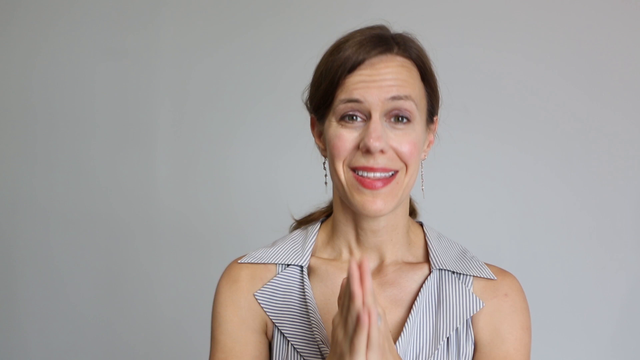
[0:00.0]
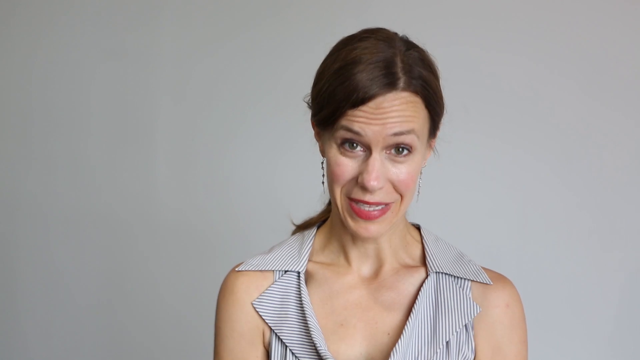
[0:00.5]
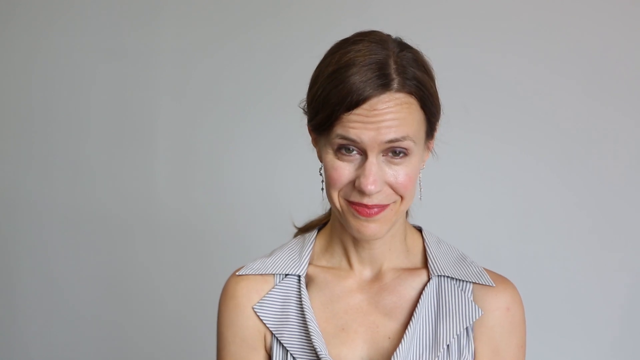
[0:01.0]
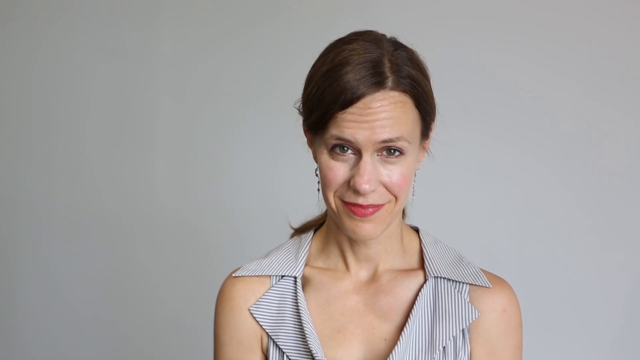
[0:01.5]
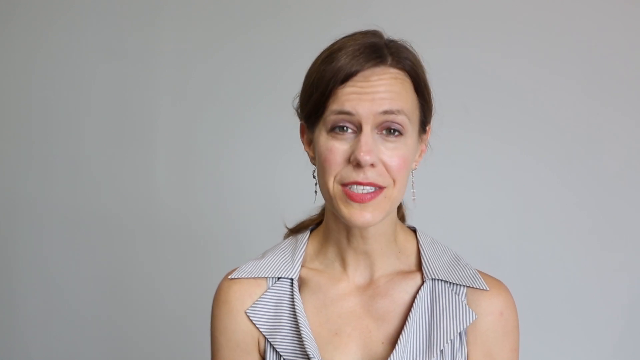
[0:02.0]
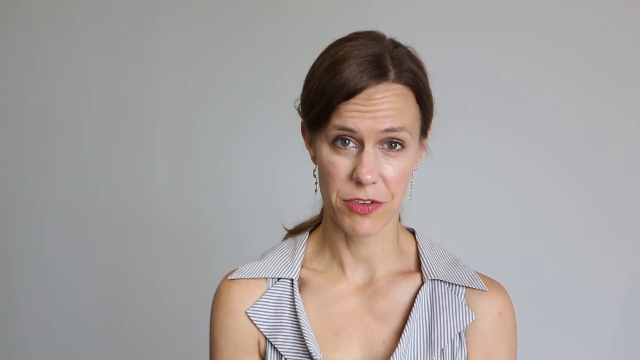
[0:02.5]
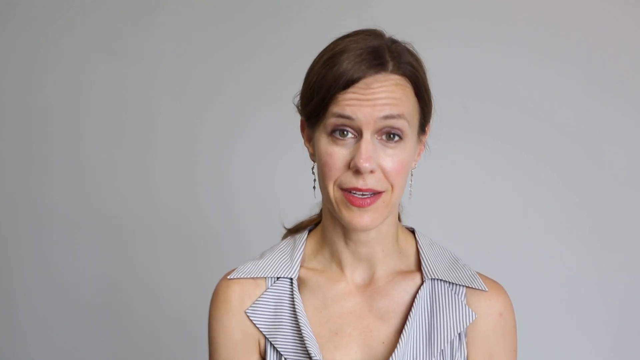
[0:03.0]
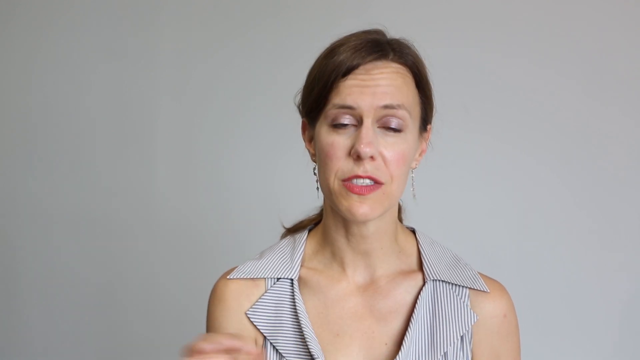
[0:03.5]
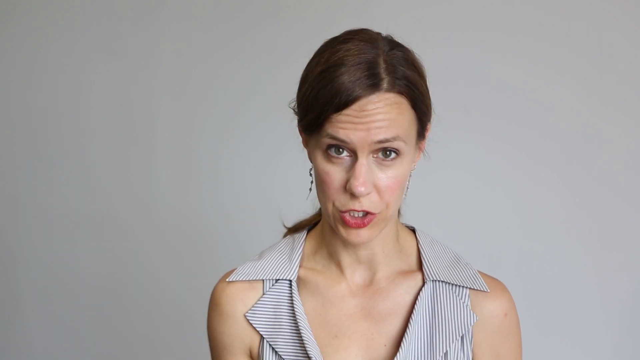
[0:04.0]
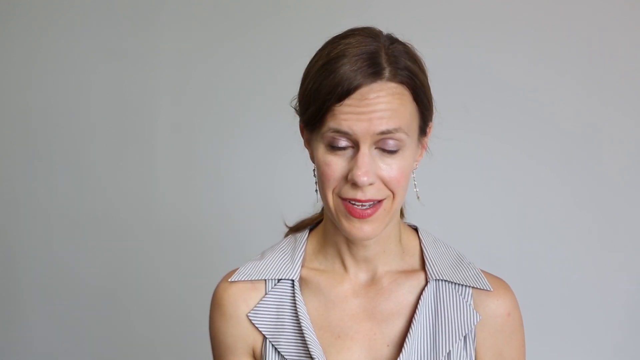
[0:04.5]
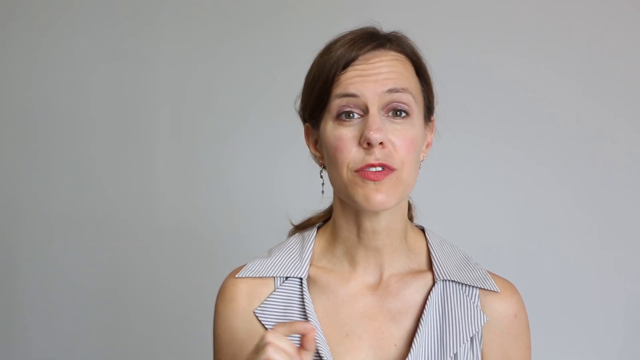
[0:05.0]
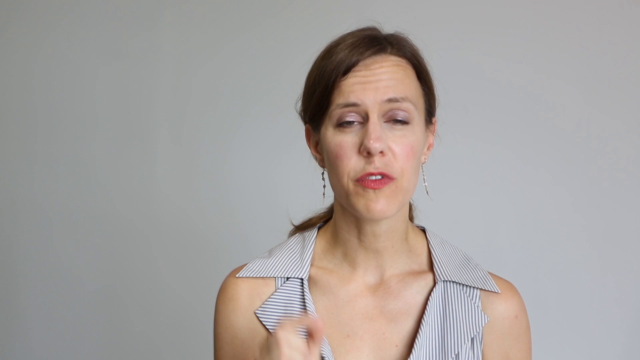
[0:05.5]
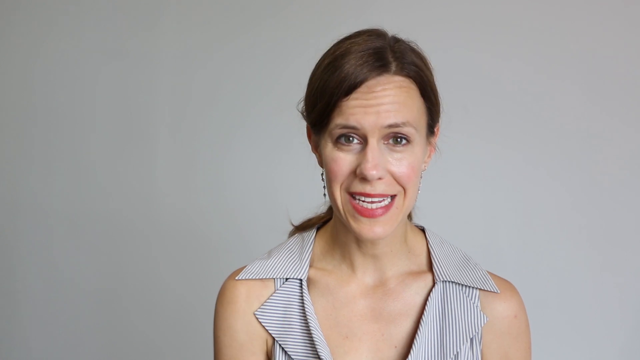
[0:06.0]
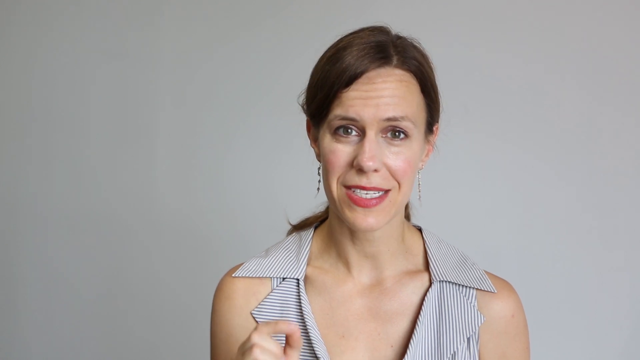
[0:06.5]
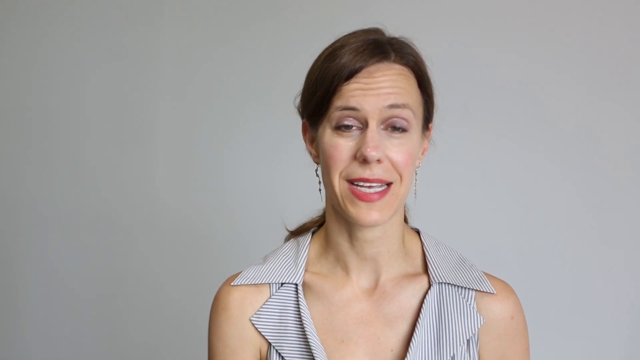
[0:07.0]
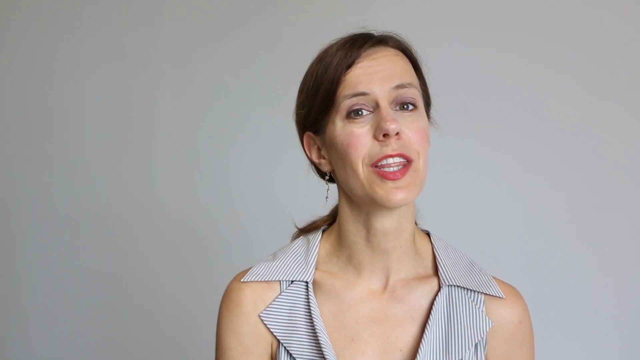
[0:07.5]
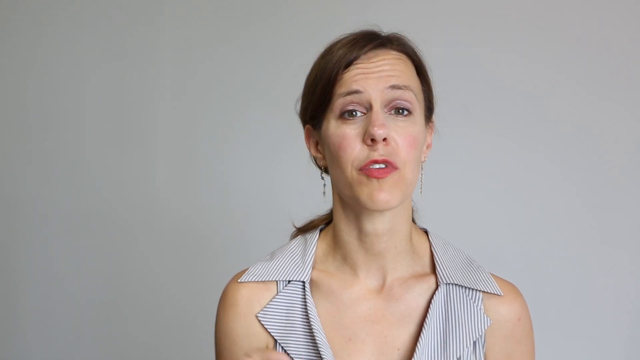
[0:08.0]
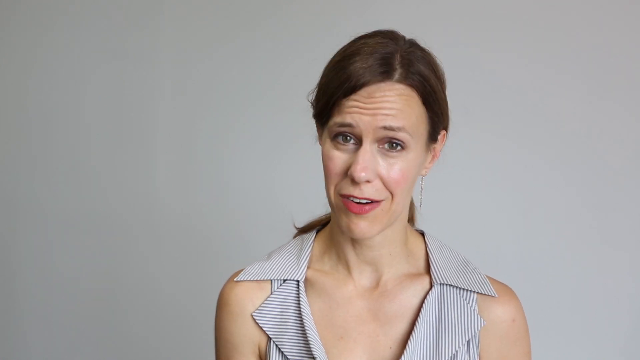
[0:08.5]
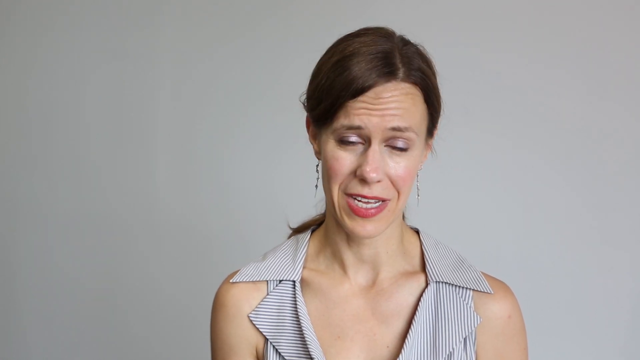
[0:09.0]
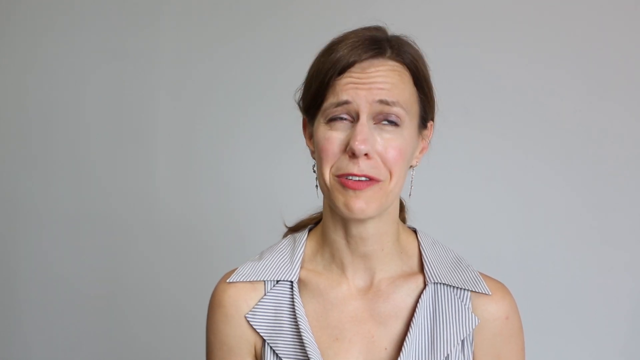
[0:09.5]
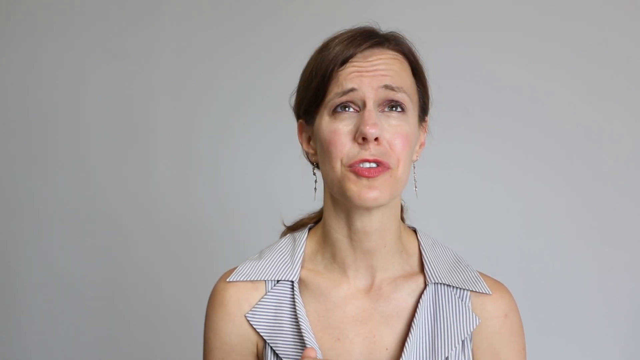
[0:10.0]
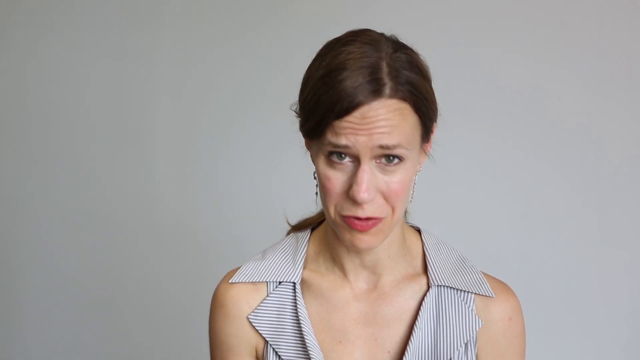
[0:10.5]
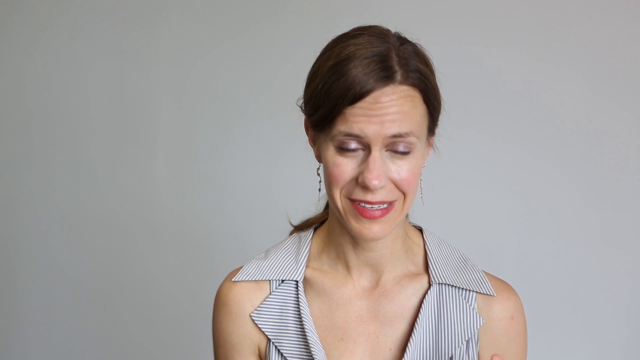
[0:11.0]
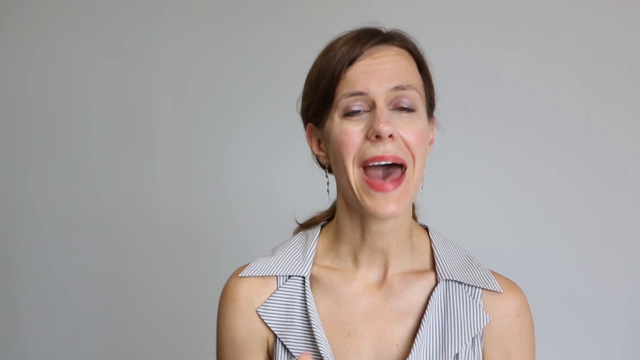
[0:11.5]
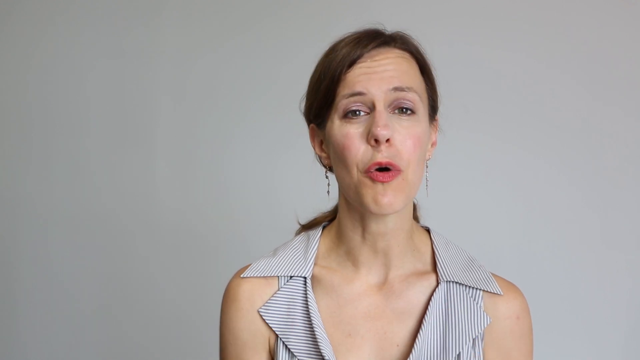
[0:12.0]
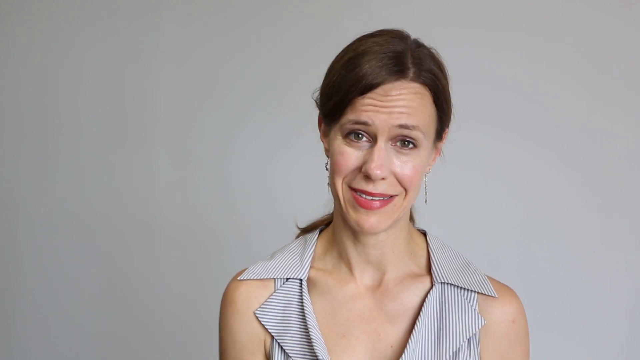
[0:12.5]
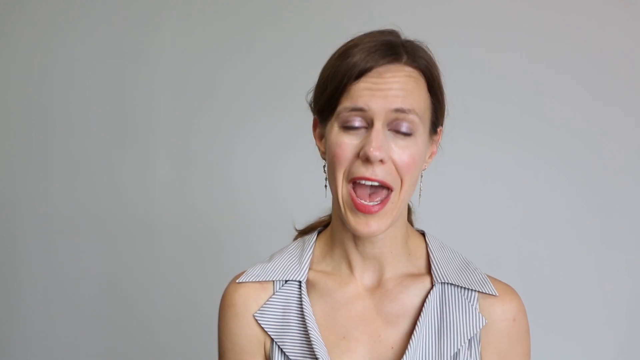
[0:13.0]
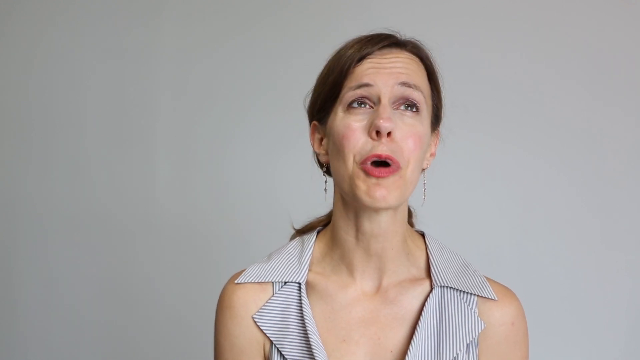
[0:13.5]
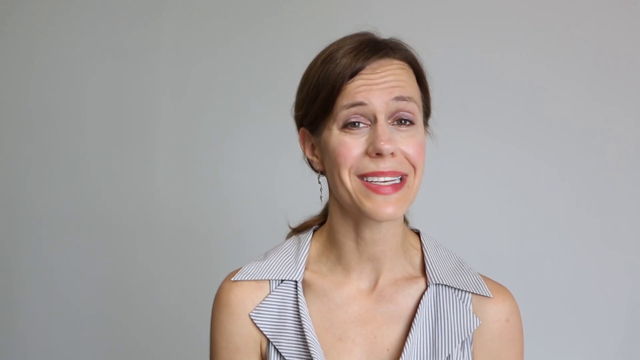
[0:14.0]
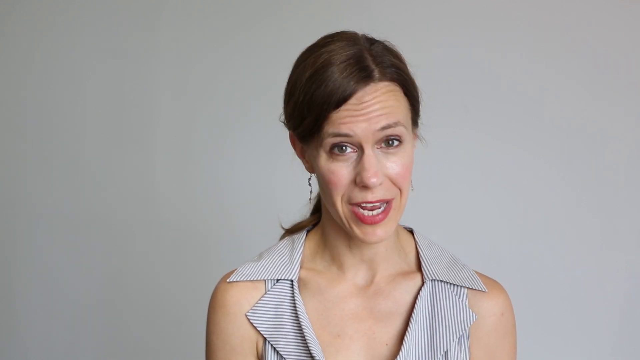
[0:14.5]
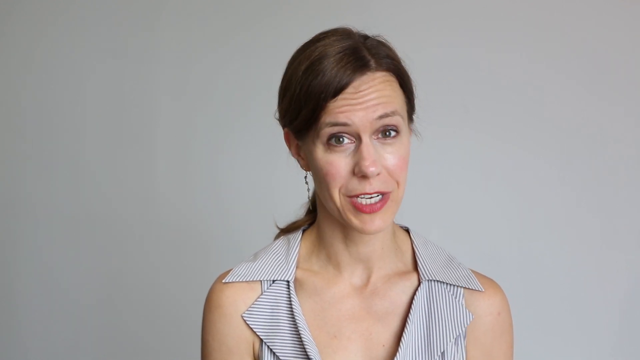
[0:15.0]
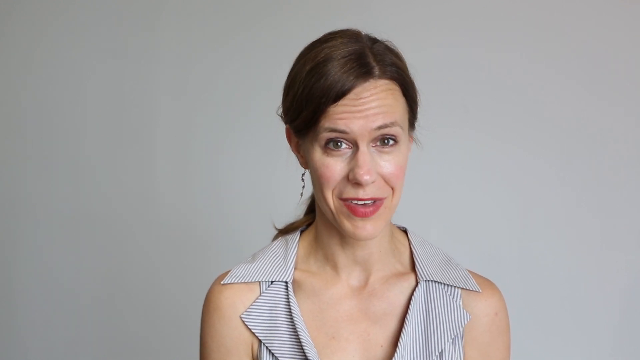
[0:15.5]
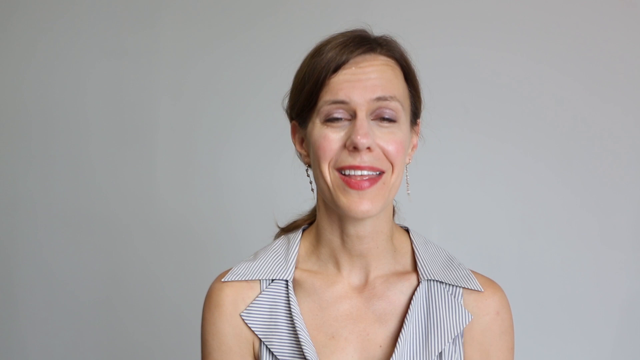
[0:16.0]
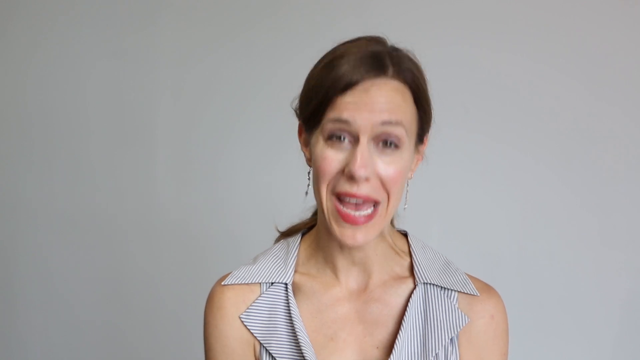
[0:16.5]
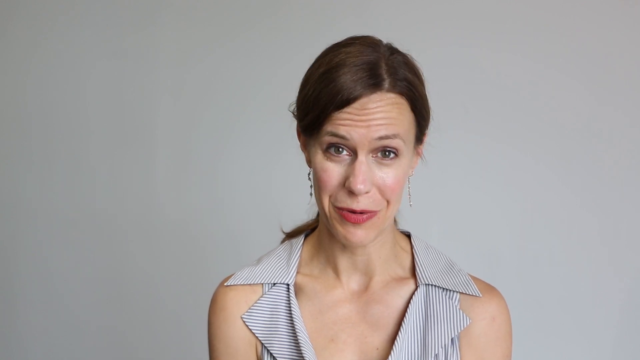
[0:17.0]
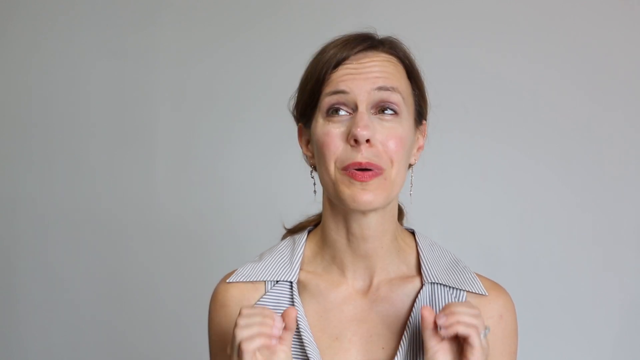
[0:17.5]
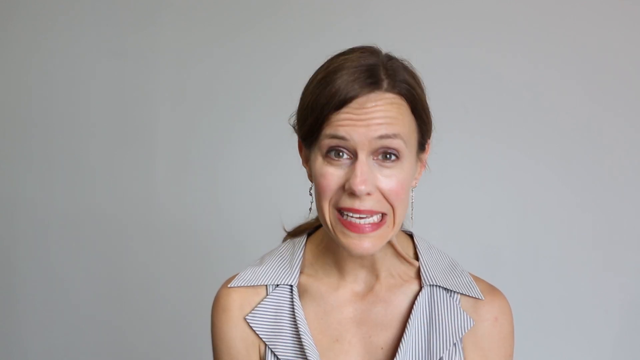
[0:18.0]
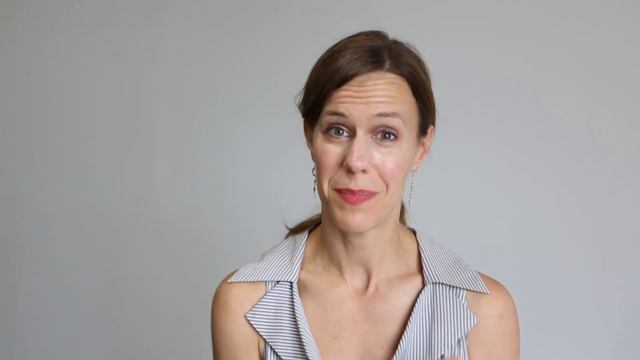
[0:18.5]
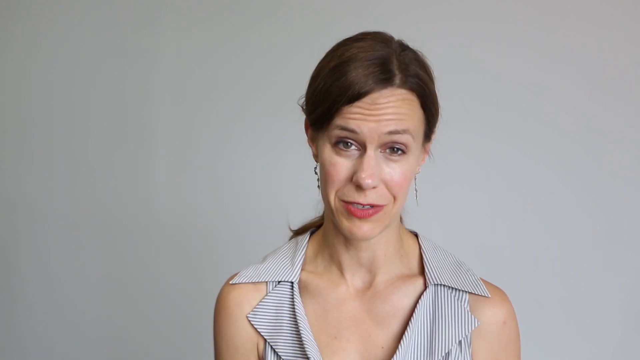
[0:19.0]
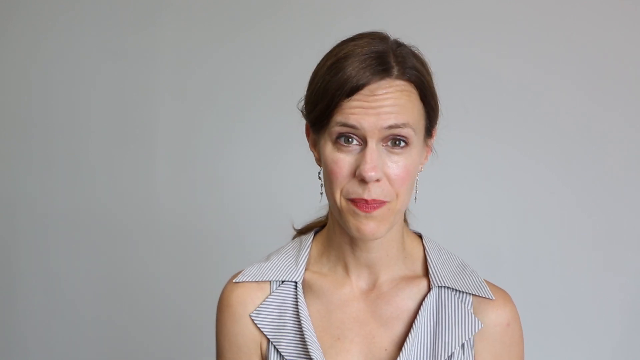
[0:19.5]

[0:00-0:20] A woman stands in front of a light gray background, seen from the chest up. She is Caucasian, with brown hair tied back into a low ponytail and tucked neatly behind her ears. She wears dark pink lipstick, long dangling earrings, and a shirt that looks like a white and gray thin-line striped tank top with a large collar. As she begins speaking, she holds both hands in front of her chest with her palms touching and fingers straight, smiling broadly. She puts her hands down, nods her head forward and raises her eyebrows. She continues speaking, saying a sentence and then smiling a bit while keeping eye contact with the viewer. She is very expressive, raising her eyebrows and sometimes wrinkling her forehead. She looks up and then nods her head in emphasis, raises both hands a bit to her chest and brings them back down with her fingers slightly curled in. After putting her hands down and speaking for a few seconds, she puts her hands together again with fingers straight and palms touching, then puts them down, makes two fists and gives them one pump with her elbows bent as she continues speaking to the camera.